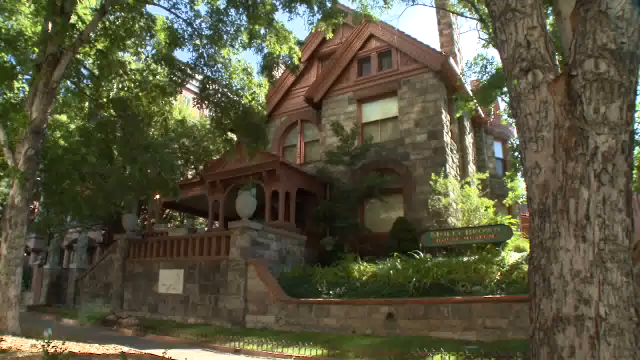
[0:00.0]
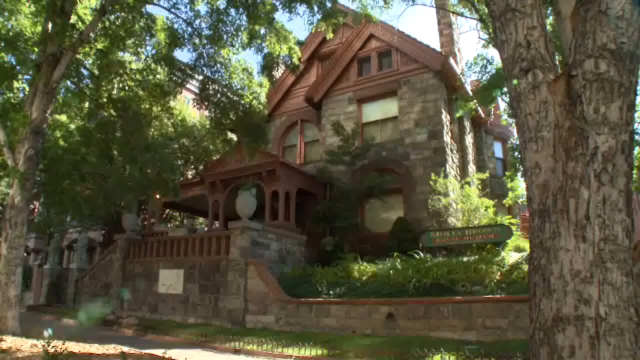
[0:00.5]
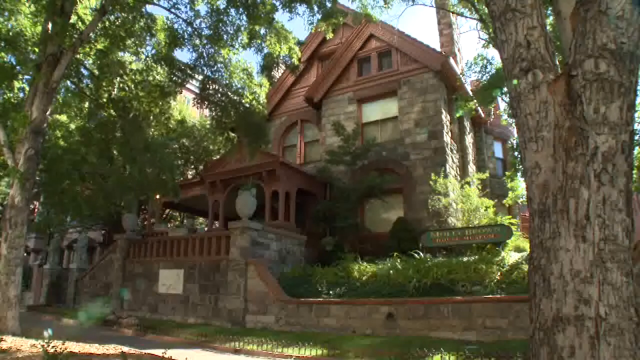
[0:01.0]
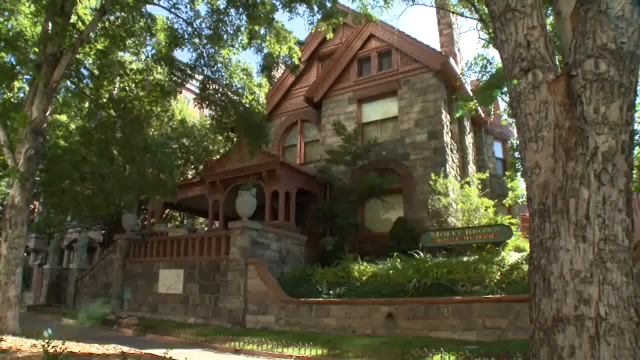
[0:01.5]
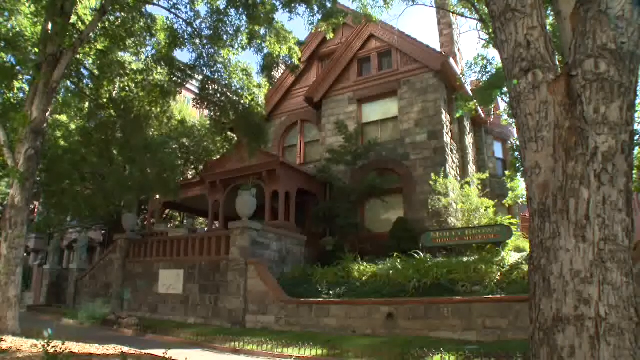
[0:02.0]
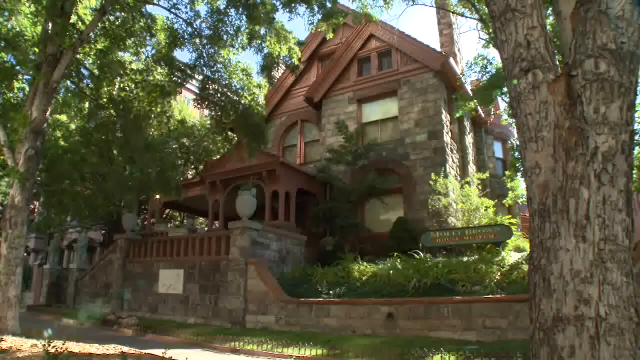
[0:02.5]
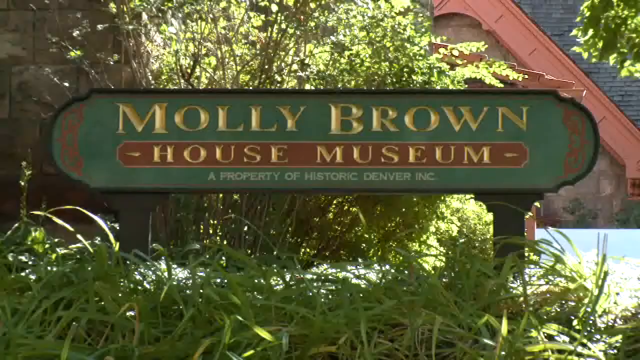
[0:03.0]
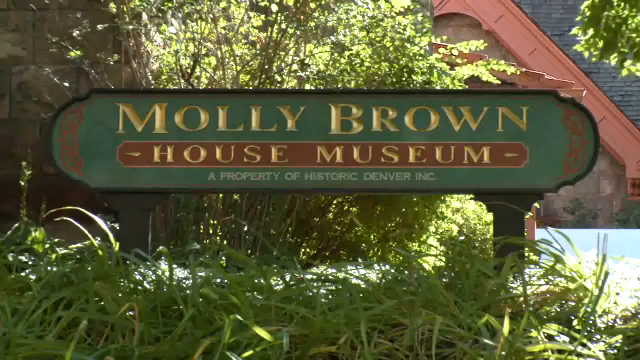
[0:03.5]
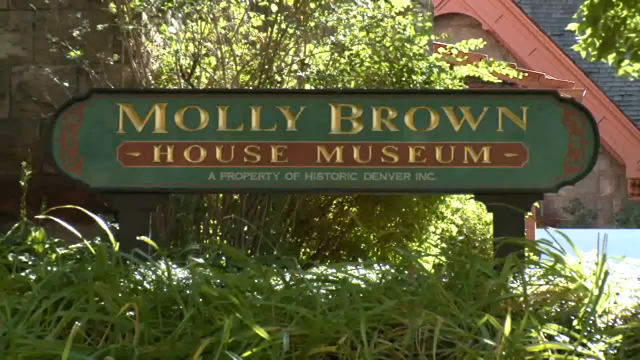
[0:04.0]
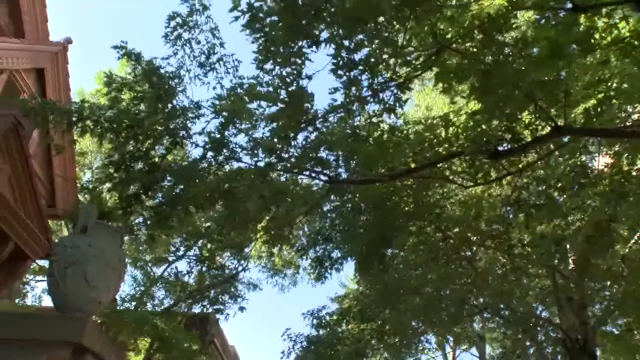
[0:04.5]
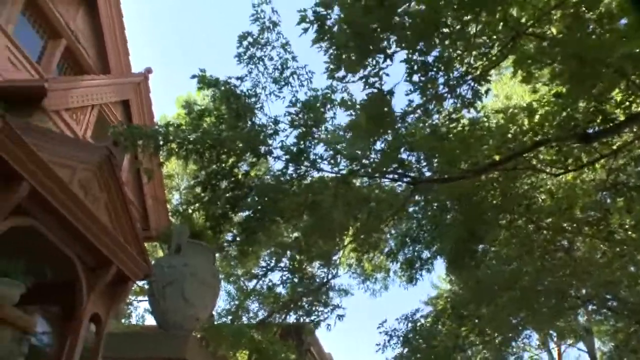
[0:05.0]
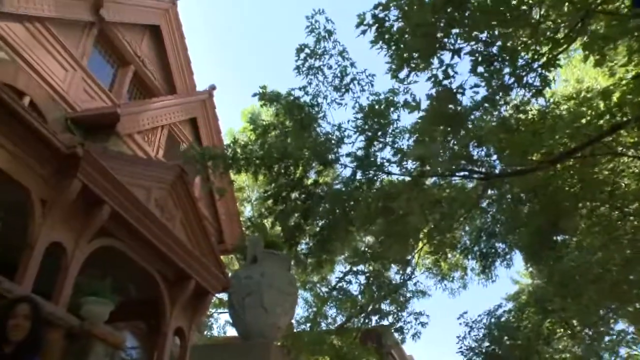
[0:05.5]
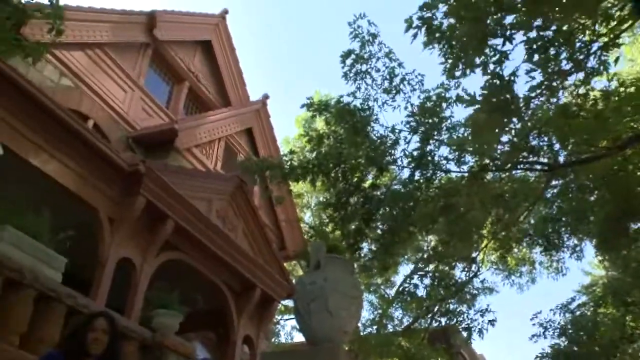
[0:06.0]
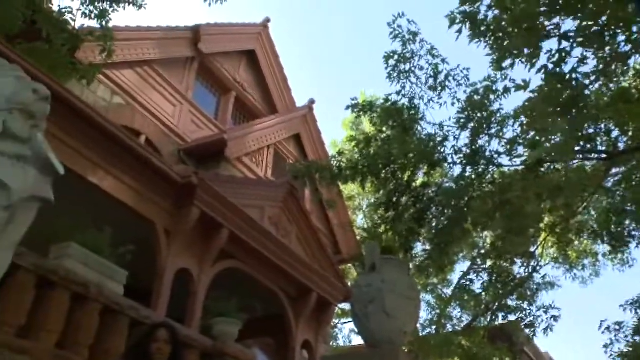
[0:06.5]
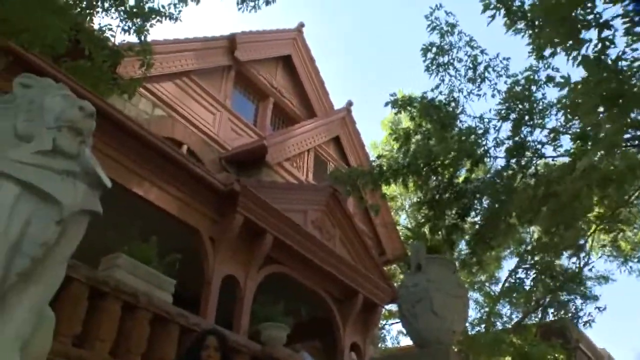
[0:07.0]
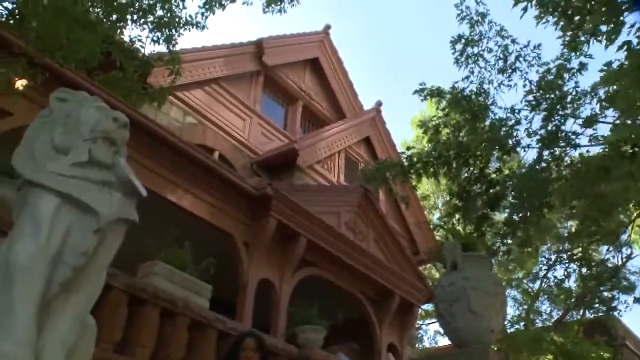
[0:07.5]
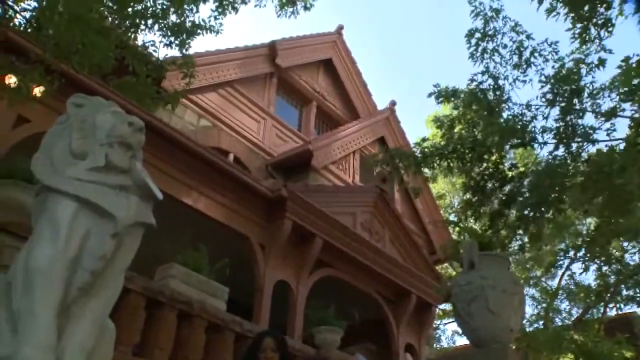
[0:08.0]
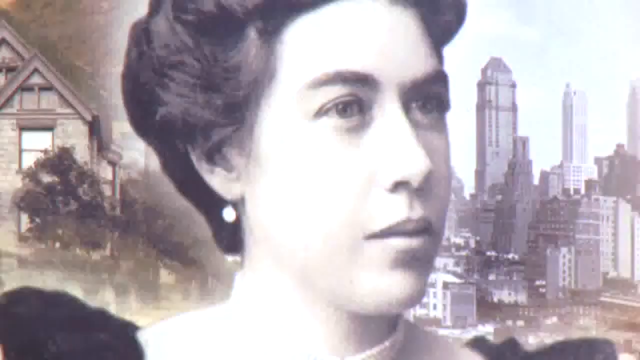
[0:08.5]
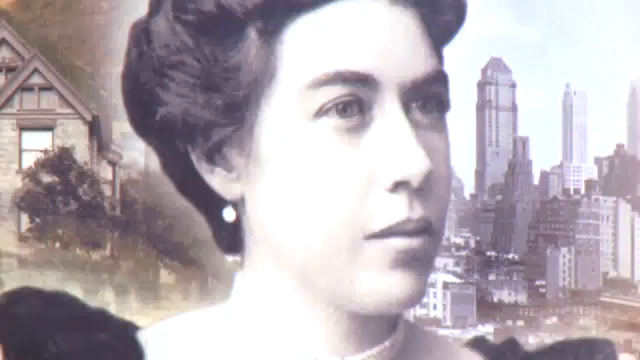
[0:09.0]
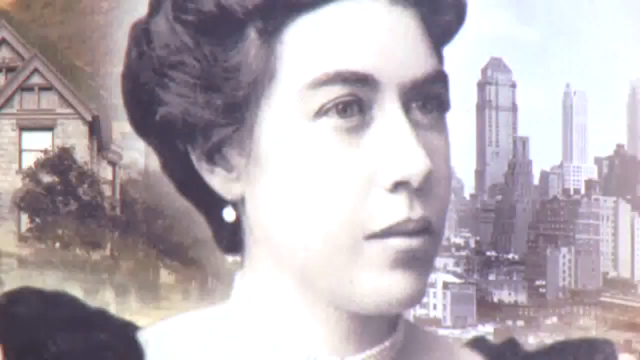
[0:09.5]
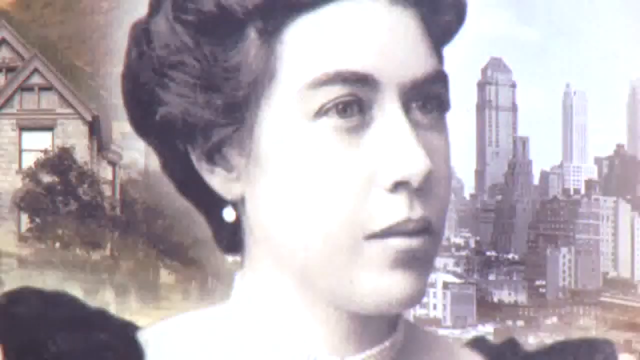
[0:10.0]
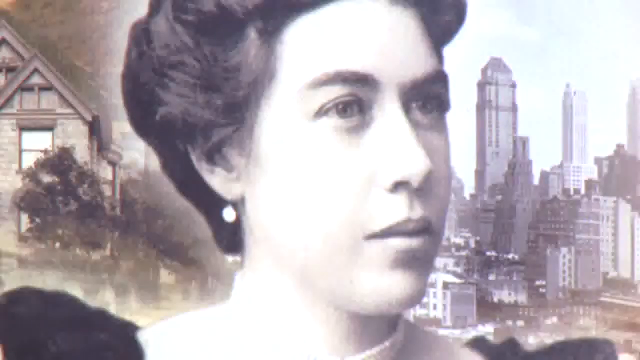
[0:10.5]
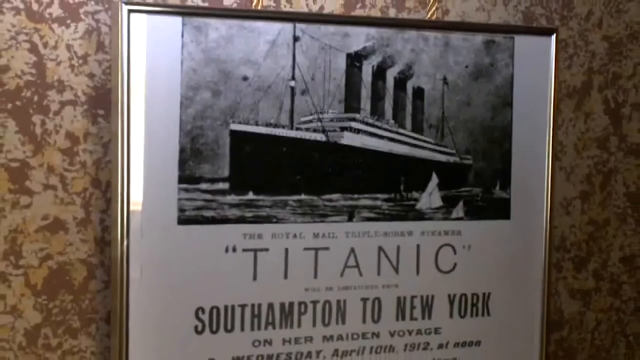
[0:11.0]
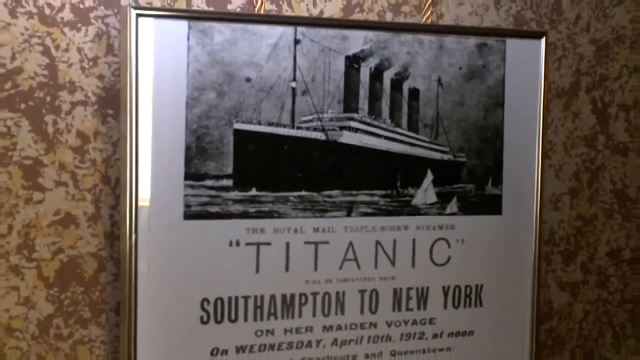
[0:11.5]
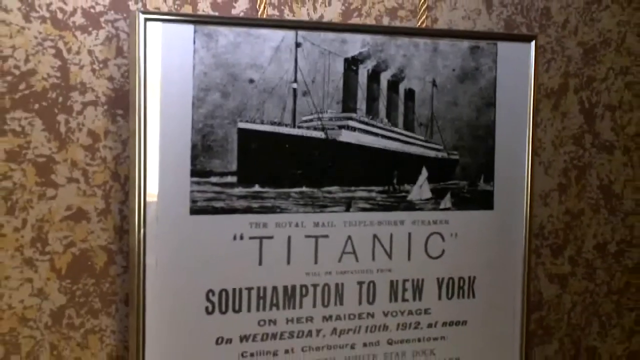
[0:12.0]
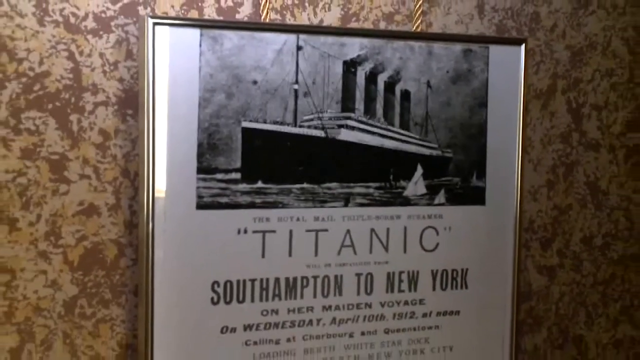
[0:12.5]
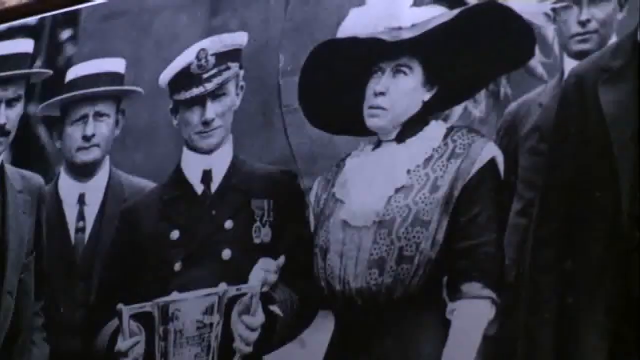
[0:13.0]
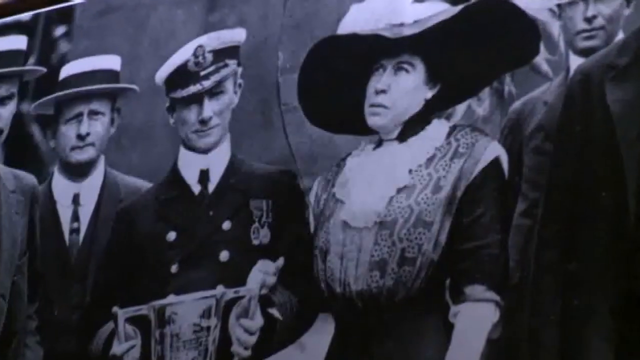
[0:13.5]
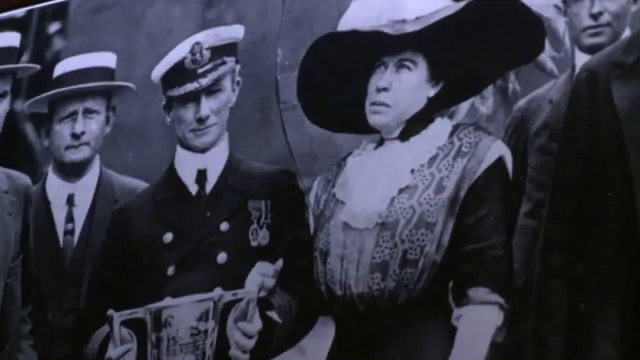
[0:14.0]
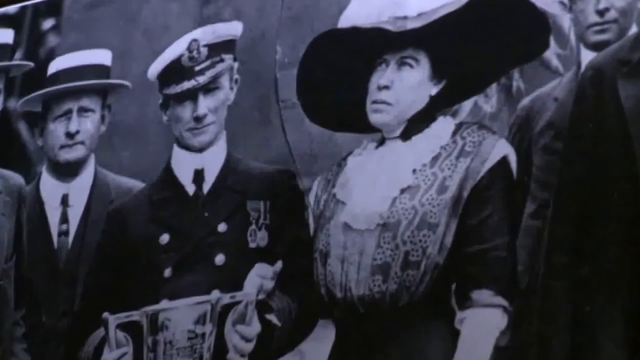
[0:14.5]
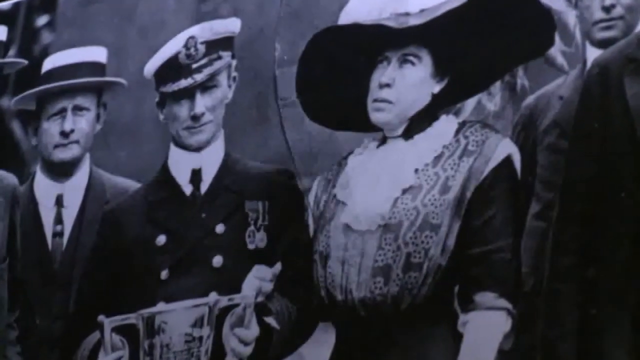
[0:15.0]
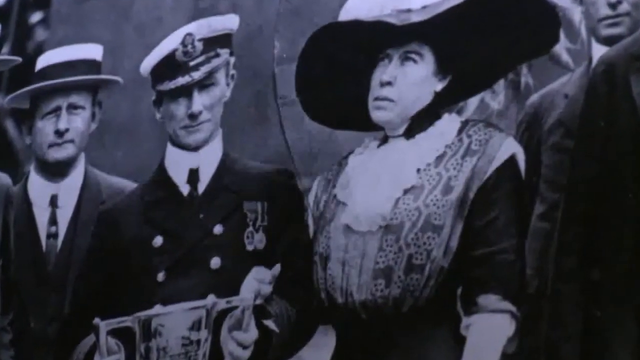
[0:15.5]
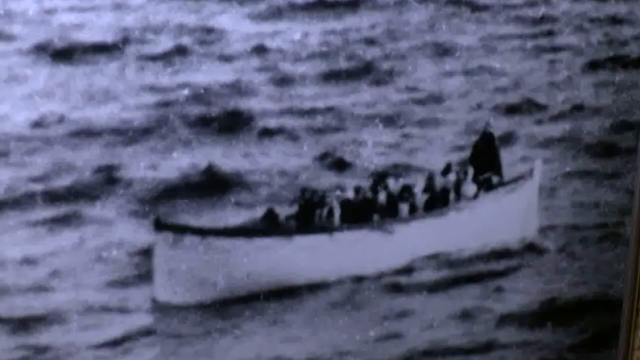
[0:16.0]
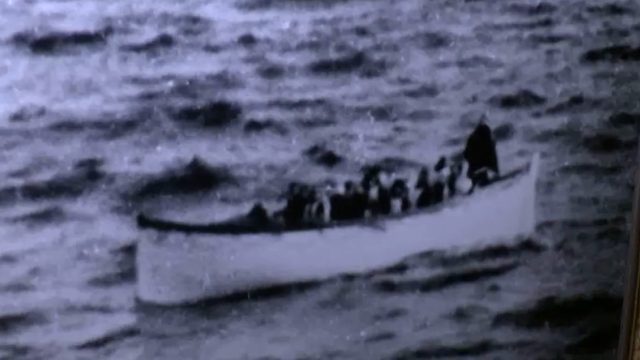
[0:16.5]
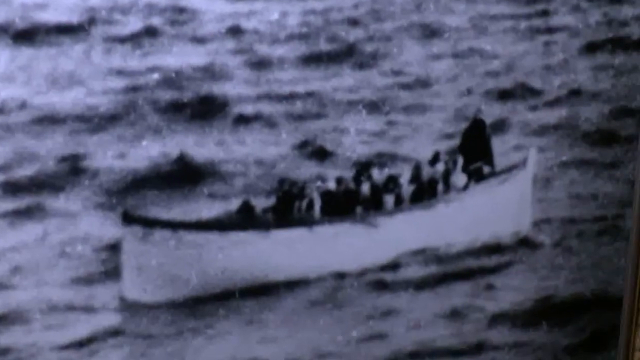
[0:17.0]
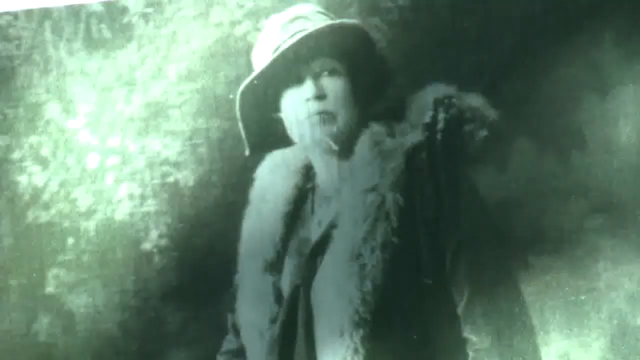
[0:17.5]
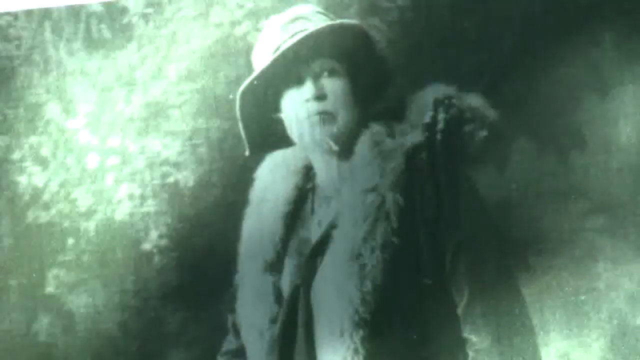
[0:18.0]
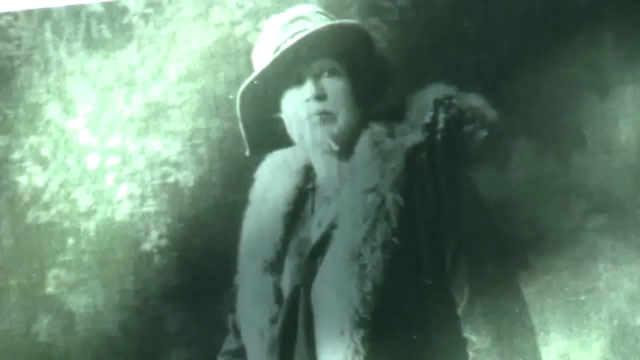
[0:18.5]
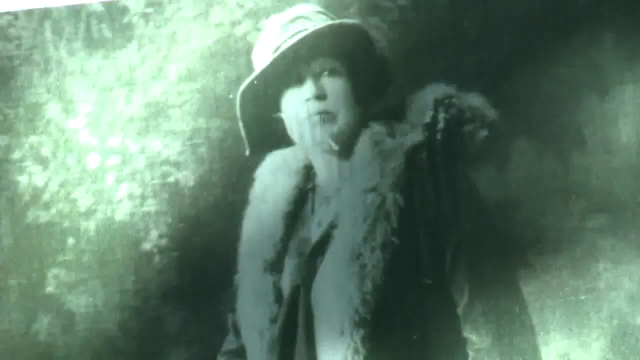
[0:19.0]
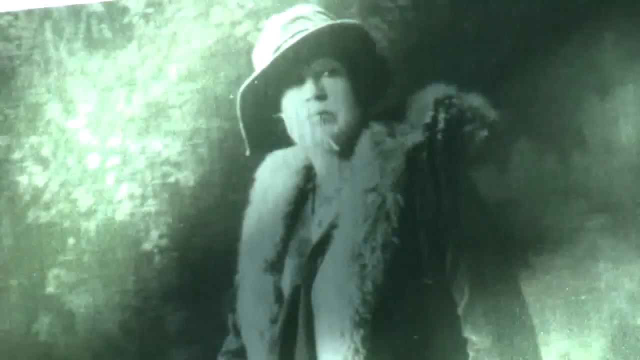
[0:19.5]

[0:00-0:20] The Molly Brown House Museum is a large old home that appears well kept and preserved. Inside are pictures of the original owners, posters about the Titanic, and some boats and historical items that are part of the museum. The house is brick on the outside with rust-colored wood trim, and many lush, very old green trees surround it. The sky is very blue with big puffy clouds. The home is very large, has many bedrooms, and is situated on a lot.